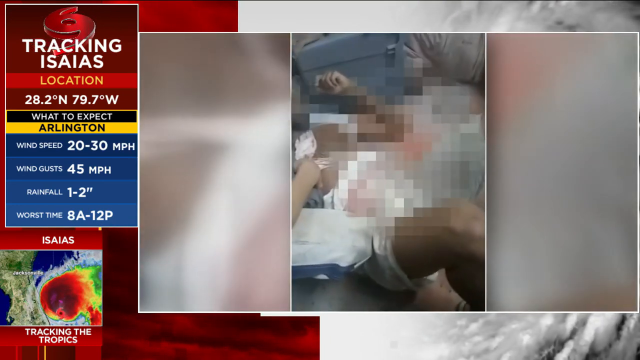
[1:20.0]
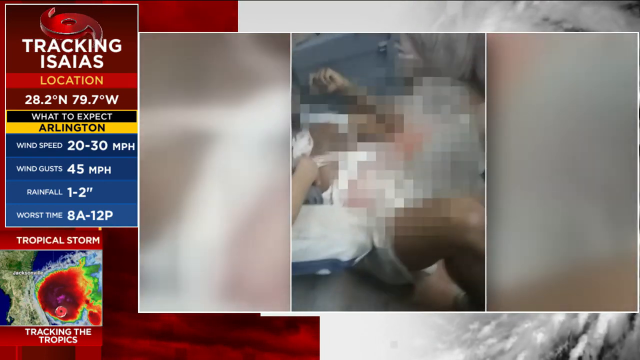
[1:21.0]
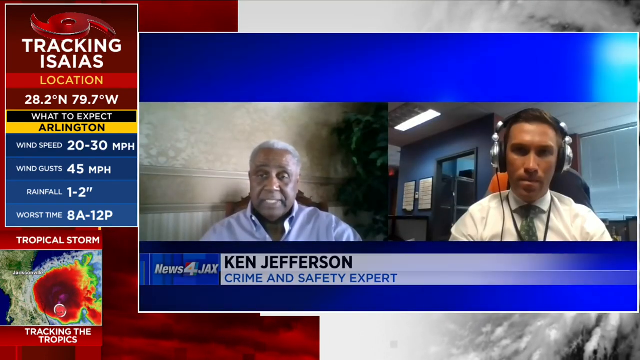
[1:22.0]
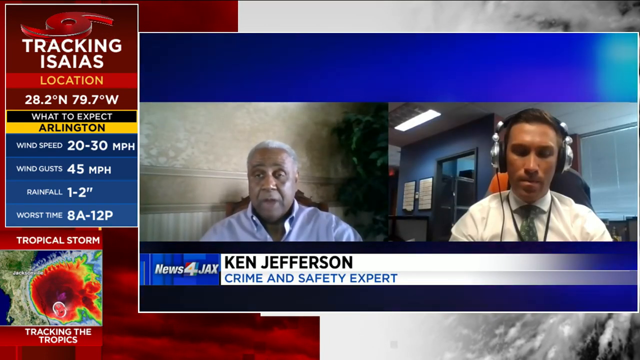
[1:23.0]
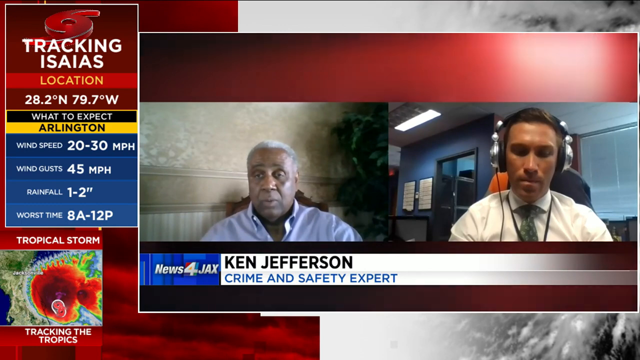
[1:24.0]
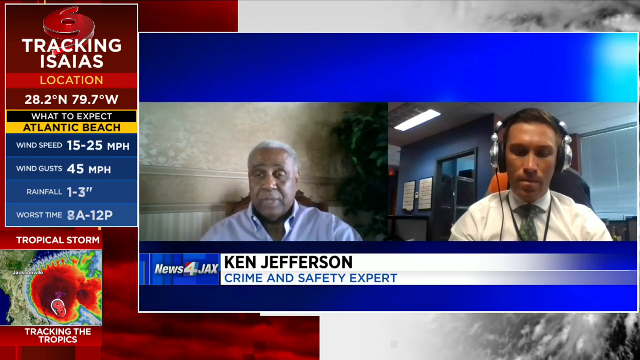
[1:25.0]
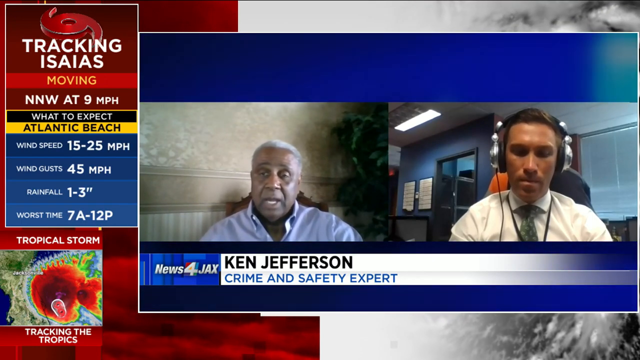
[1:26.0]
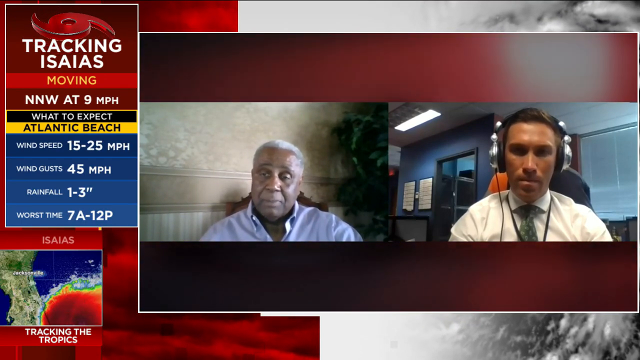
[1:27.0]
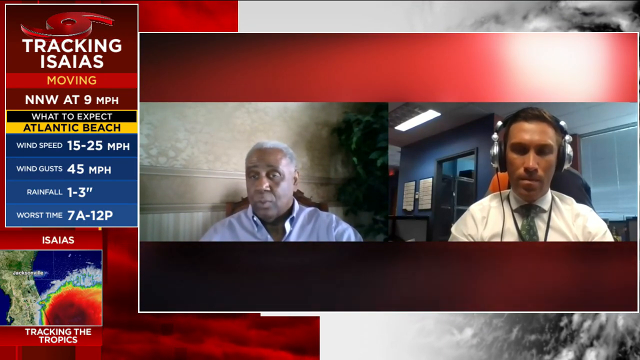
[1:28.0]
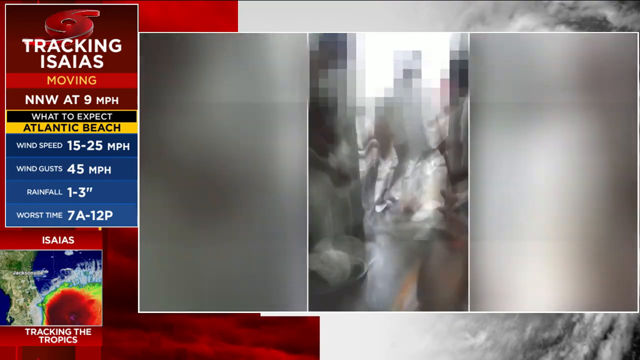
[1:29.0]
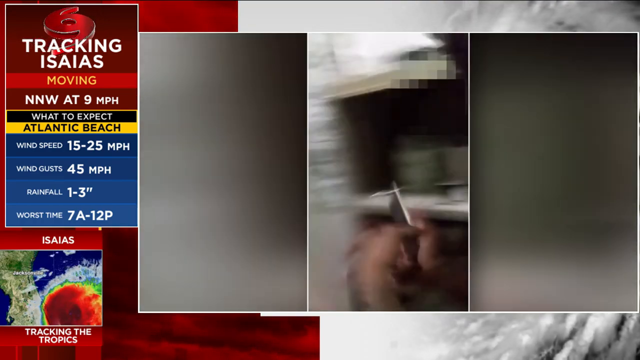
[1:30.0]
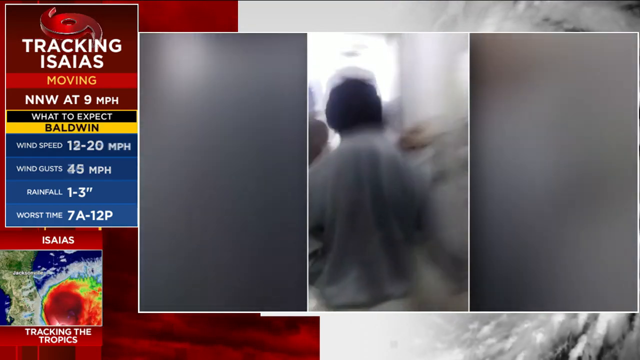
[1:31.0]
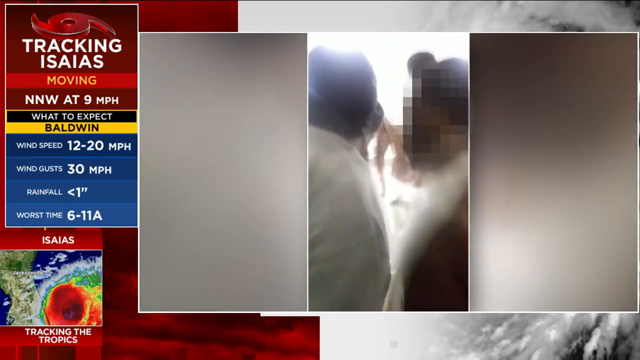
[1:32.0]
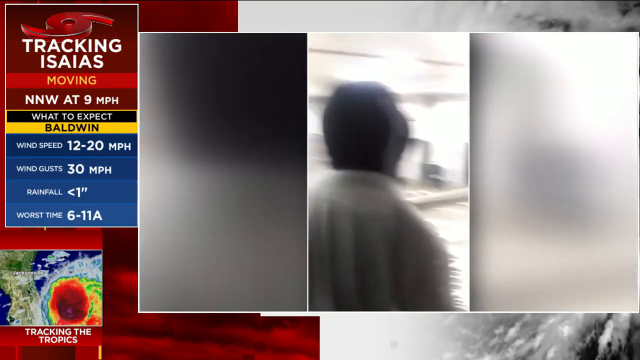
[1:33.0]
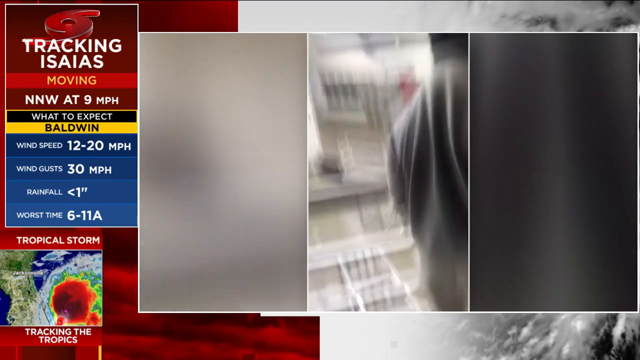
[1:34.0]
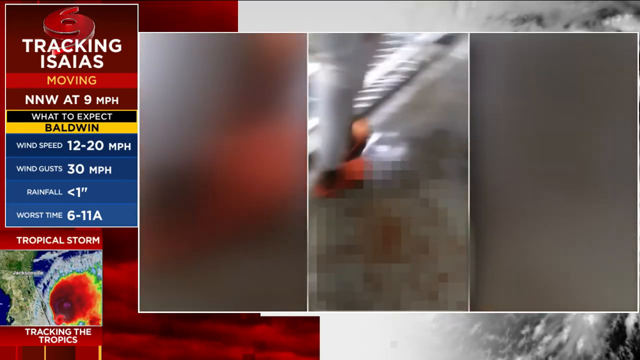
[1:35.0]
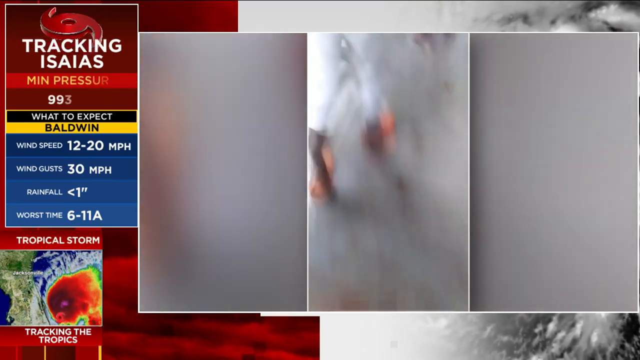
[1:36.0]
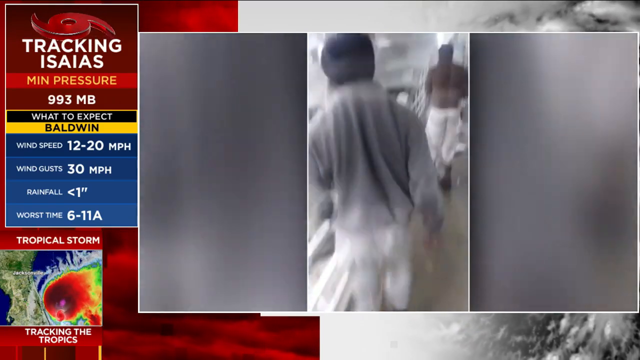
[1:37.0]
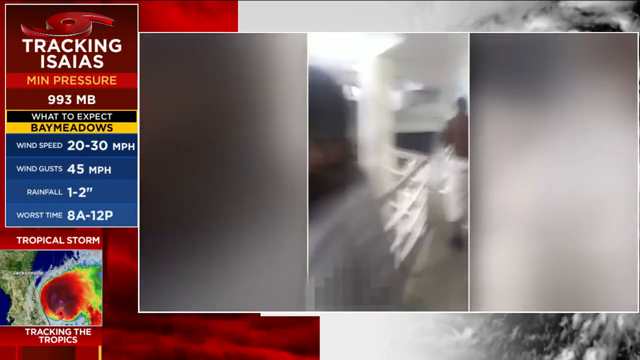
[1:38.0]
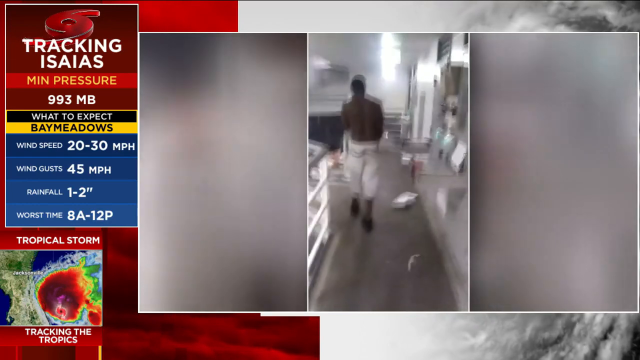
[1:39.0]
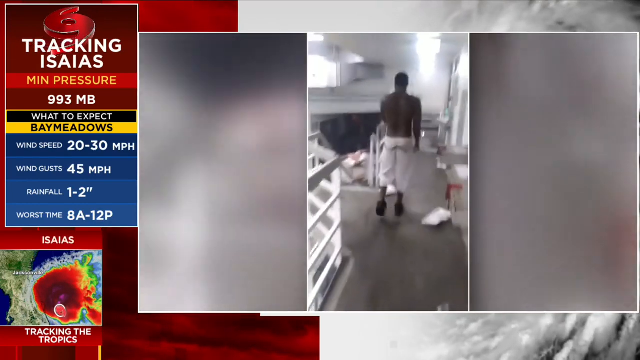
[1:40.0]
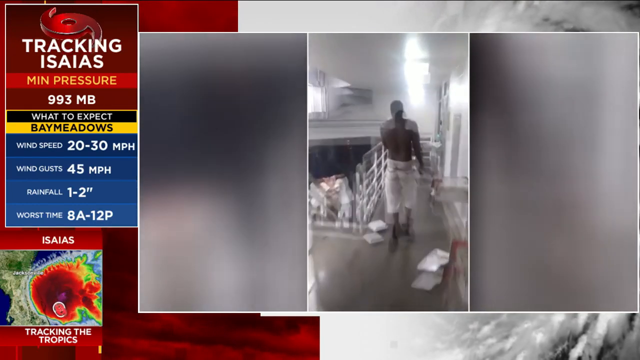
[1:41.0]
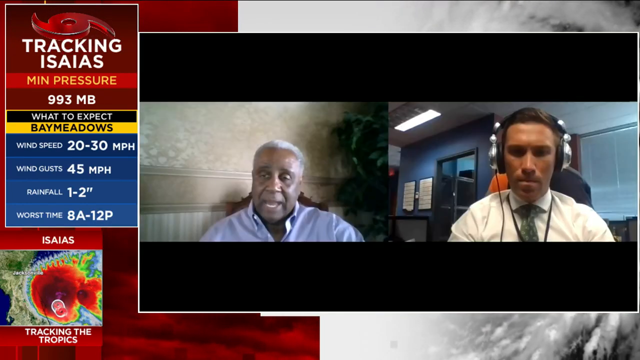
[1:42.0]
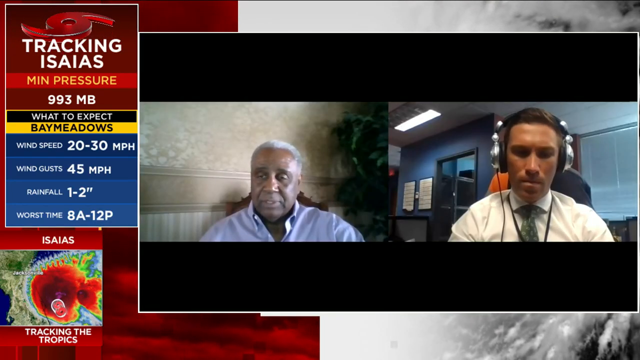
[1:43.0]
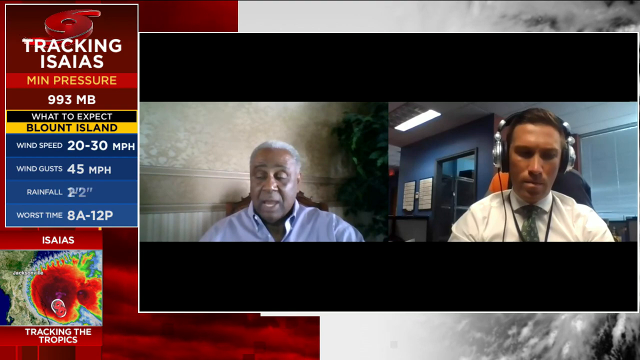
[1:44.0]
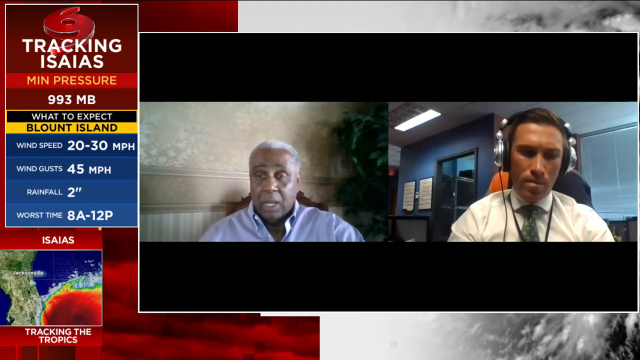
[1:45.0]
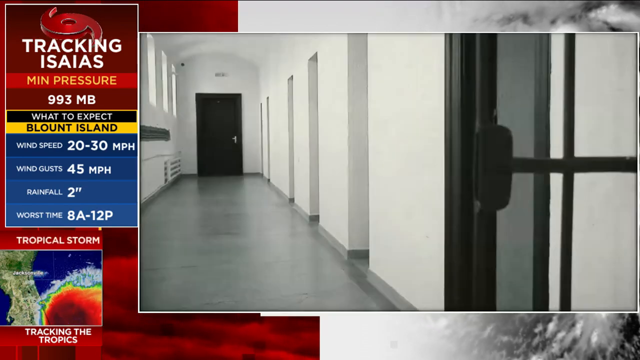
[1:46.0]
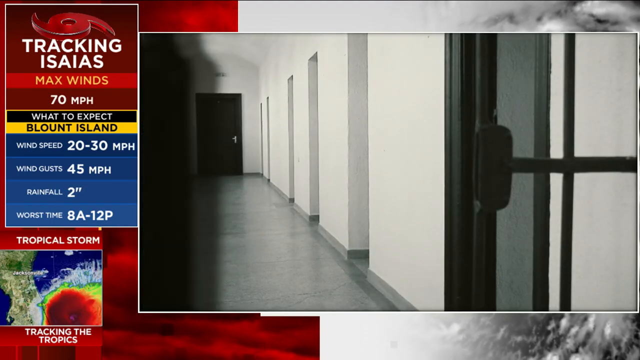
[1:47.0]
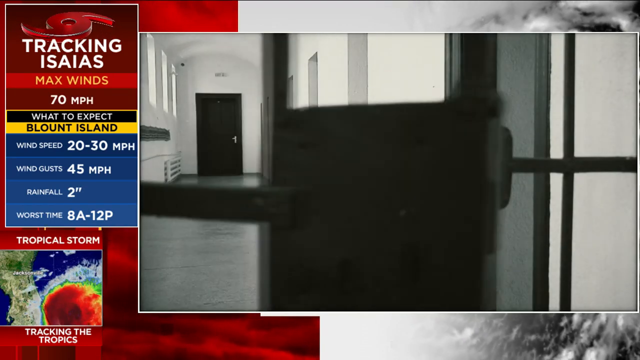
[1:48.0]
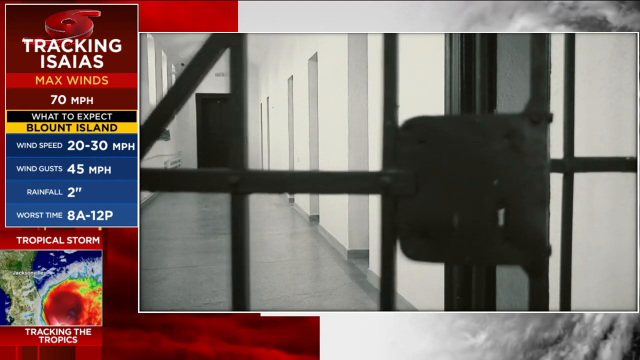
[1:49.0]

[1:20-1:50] A man is lying down with his legs extended; he is dark-skinned and wearing white. The video goes to a blue screen with two people in the middle, with text reading "Ken Jefferson, crime and safety expert". He wears a blue shirt, has darker skin, and looks about 60. The person he is talking to looks like the news anchor, wearing a white blouse with what looks like a green tie and headphones, with one lip under the other. The other man talks slightly off to the side, not looking straight at the screen, moving his head a little. The video goes to very blurry footage of people running, with one man apparently moving very fast. Two shirtless men stand, and one man wears a white shirt; they are going through what looks like the prison cell. The floors are very dirty, with red on them. One man turns backwards as if to walk backwards. It returns to the people talking. Then a white room appears with doors, one very black door all the way at the end, and small areas that are doorways or hallways. A door, apparently of a prison cell, shuts very slowly.